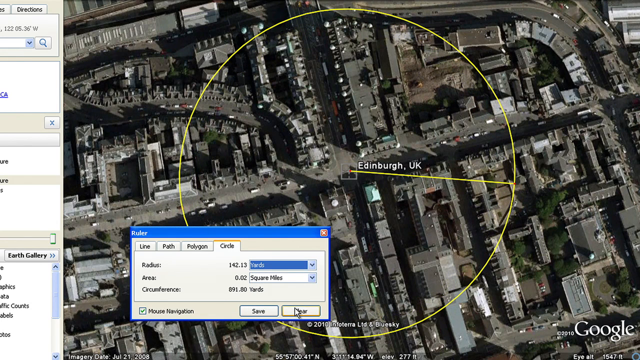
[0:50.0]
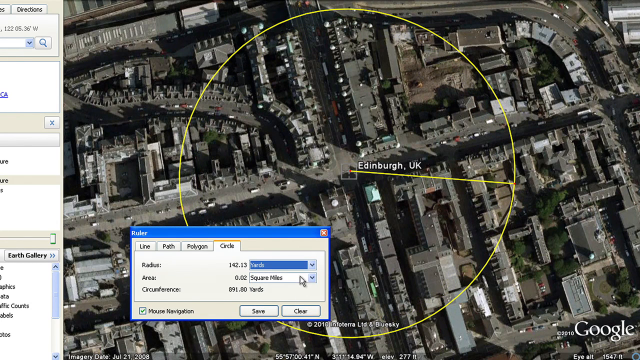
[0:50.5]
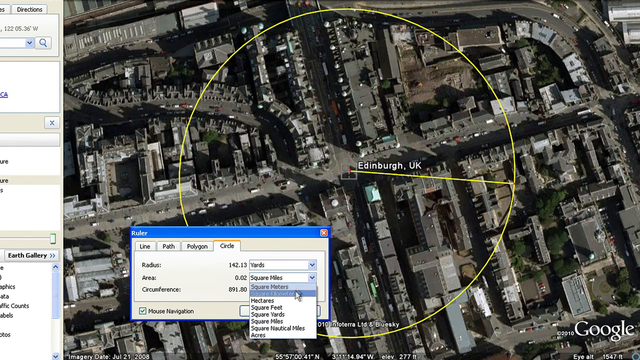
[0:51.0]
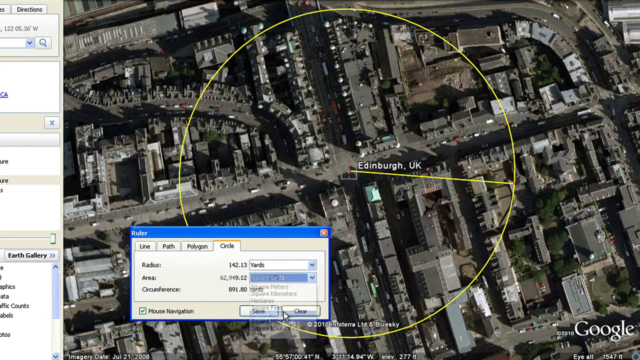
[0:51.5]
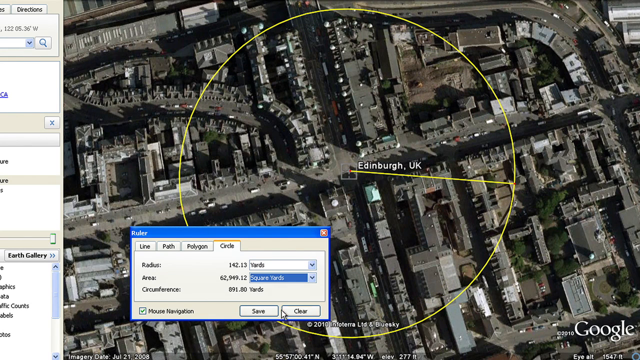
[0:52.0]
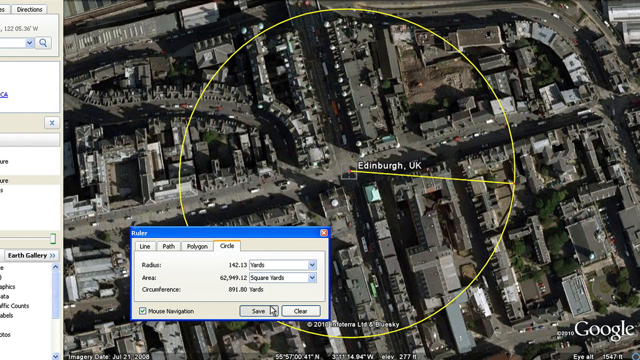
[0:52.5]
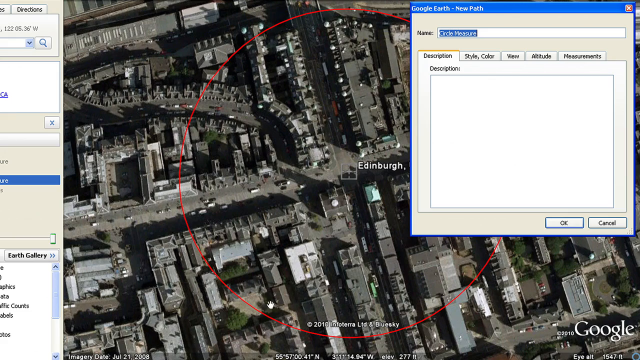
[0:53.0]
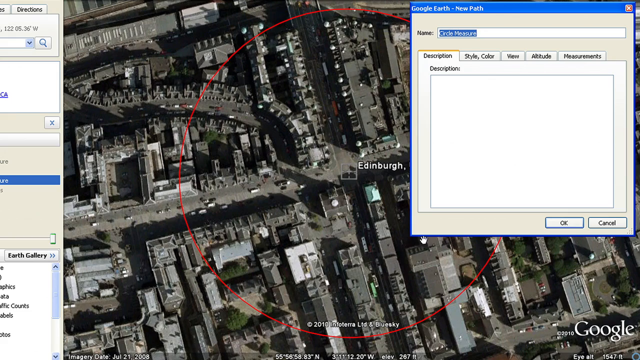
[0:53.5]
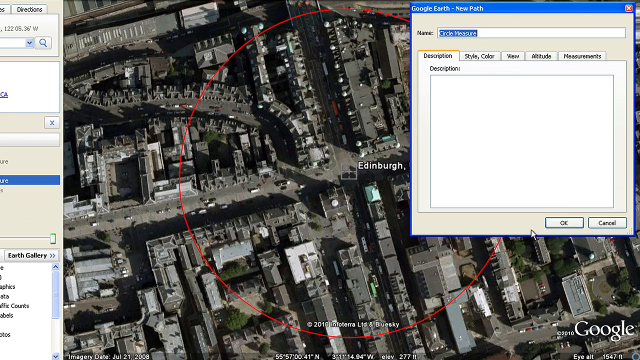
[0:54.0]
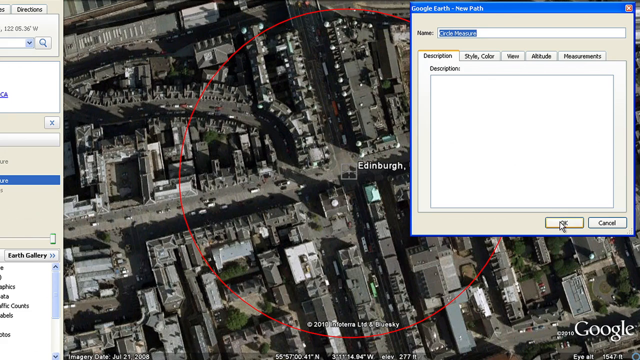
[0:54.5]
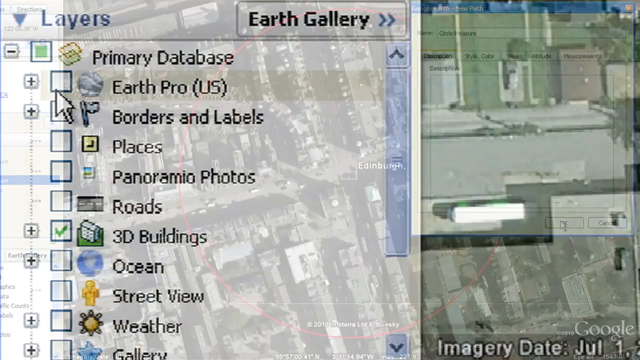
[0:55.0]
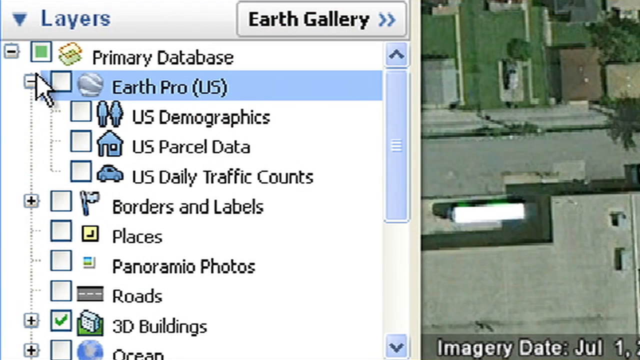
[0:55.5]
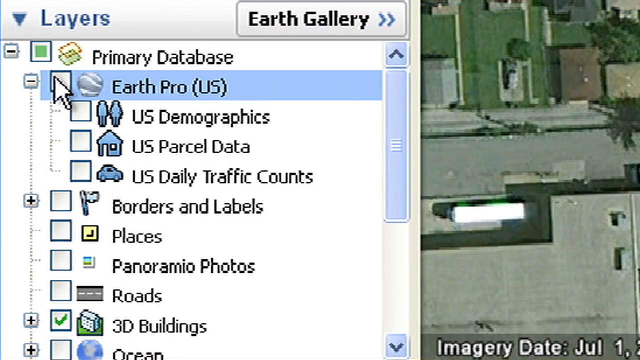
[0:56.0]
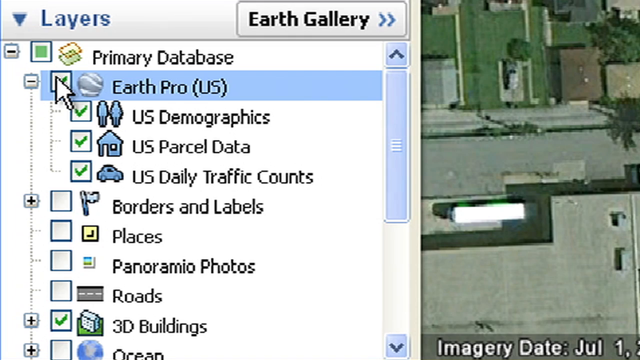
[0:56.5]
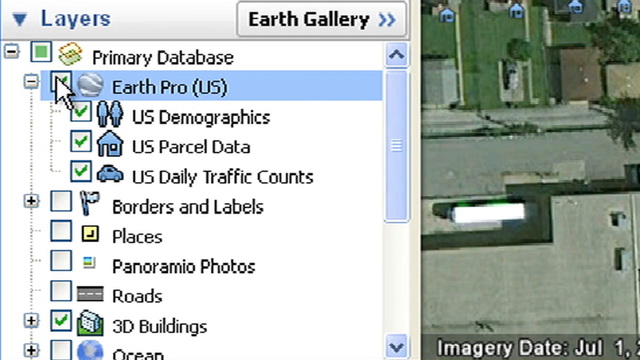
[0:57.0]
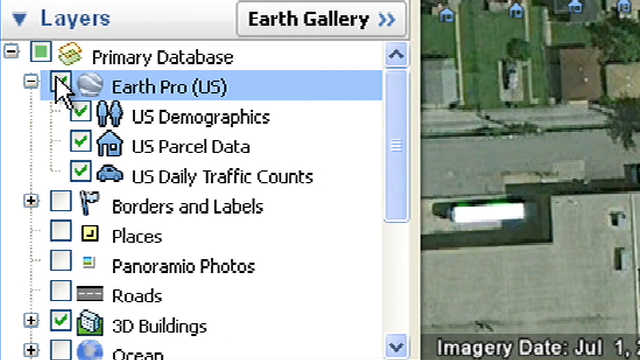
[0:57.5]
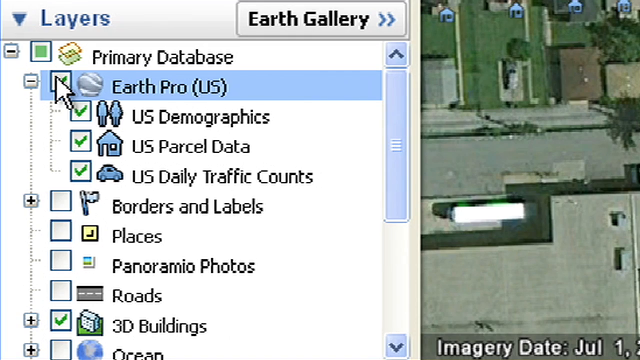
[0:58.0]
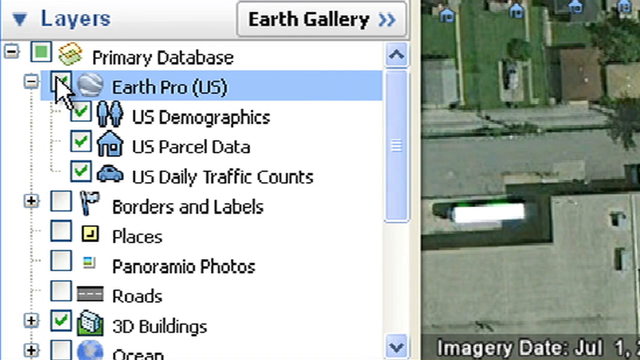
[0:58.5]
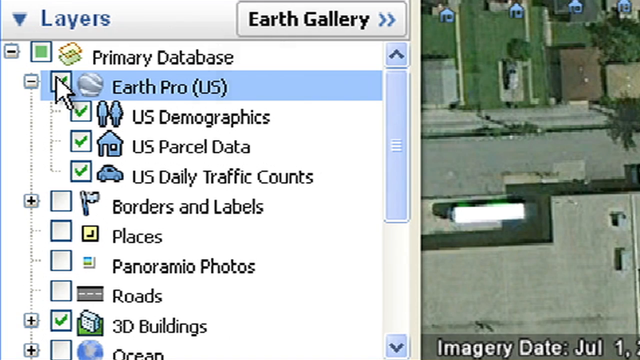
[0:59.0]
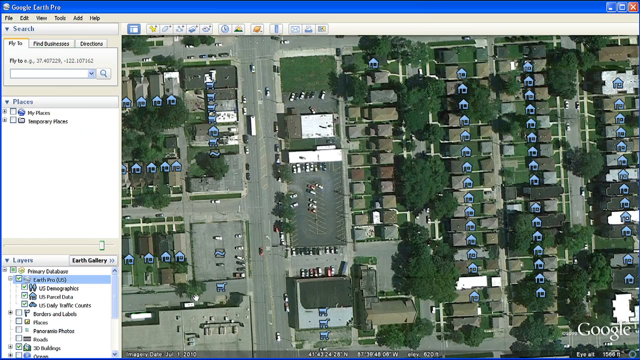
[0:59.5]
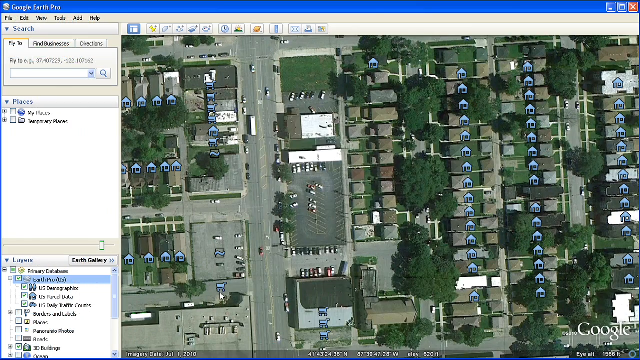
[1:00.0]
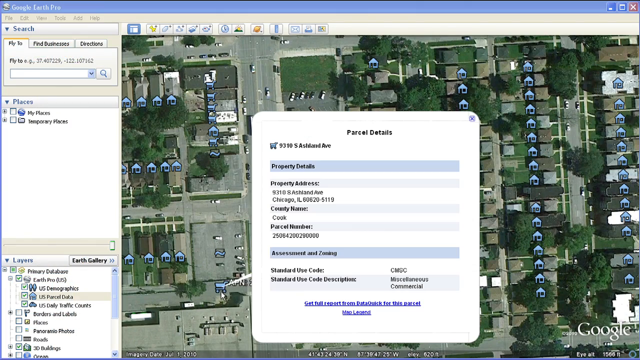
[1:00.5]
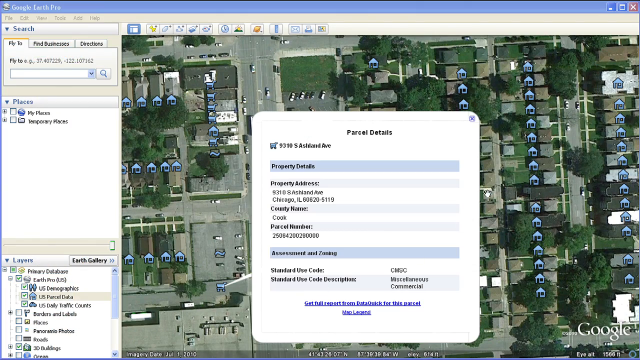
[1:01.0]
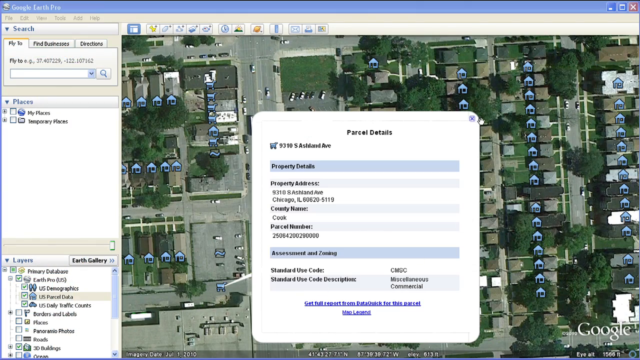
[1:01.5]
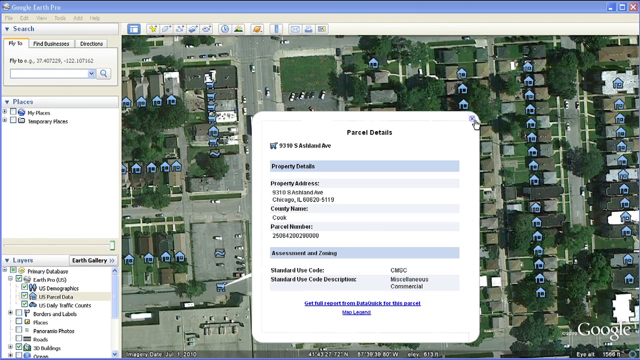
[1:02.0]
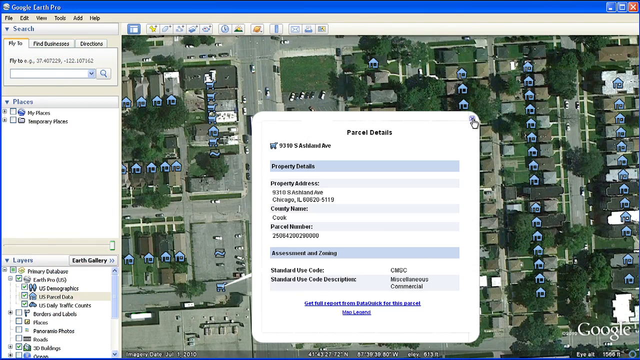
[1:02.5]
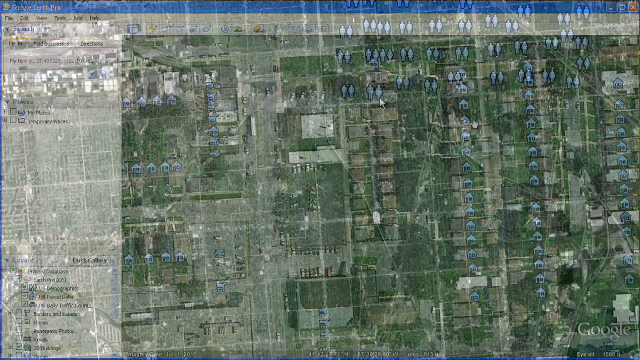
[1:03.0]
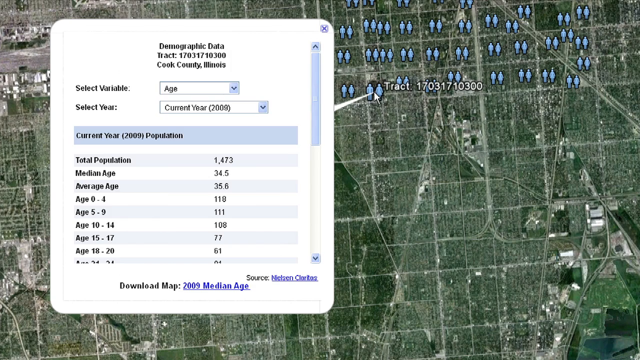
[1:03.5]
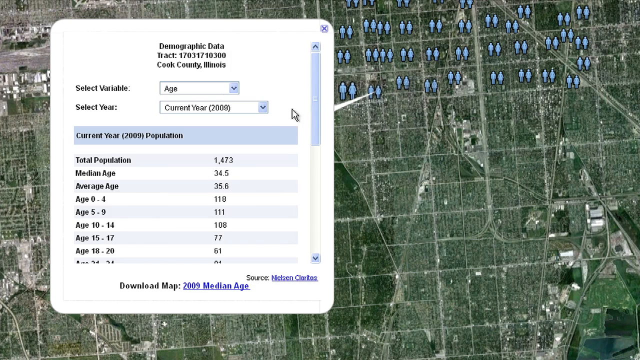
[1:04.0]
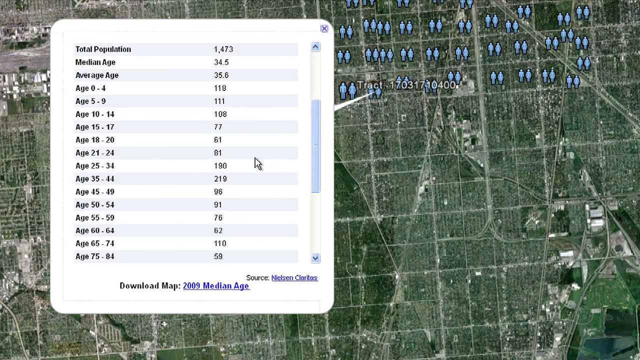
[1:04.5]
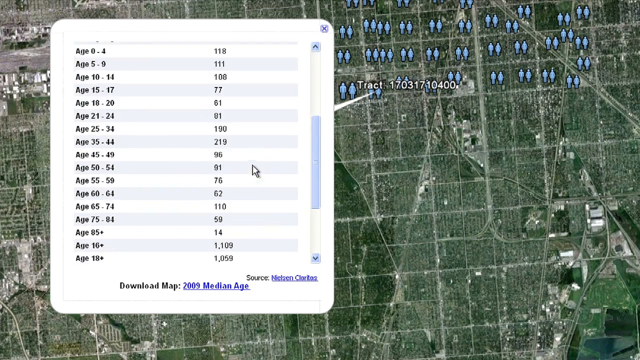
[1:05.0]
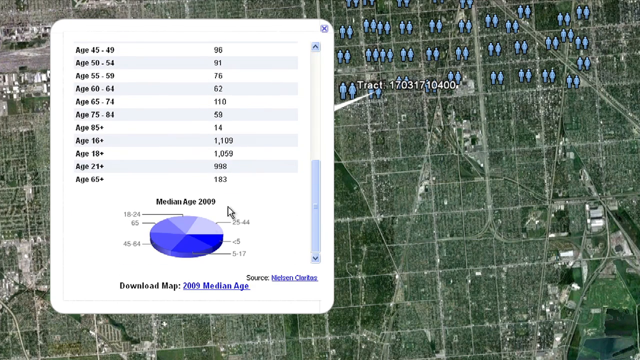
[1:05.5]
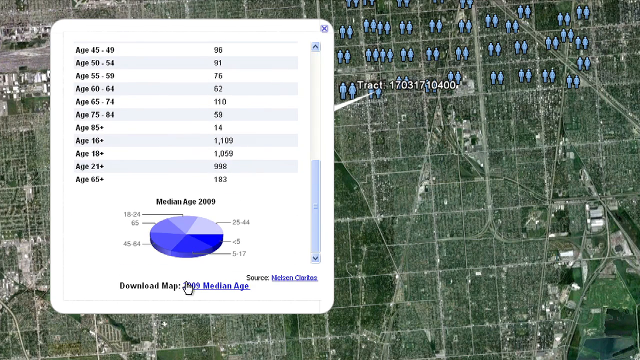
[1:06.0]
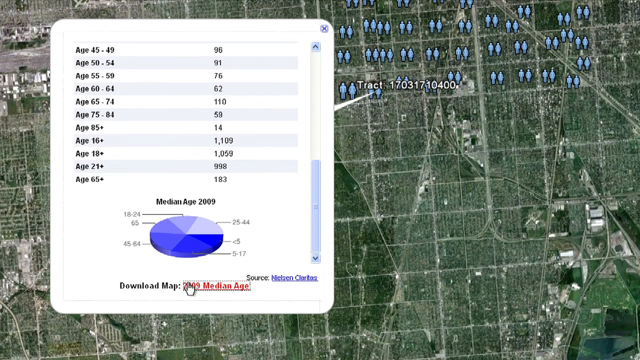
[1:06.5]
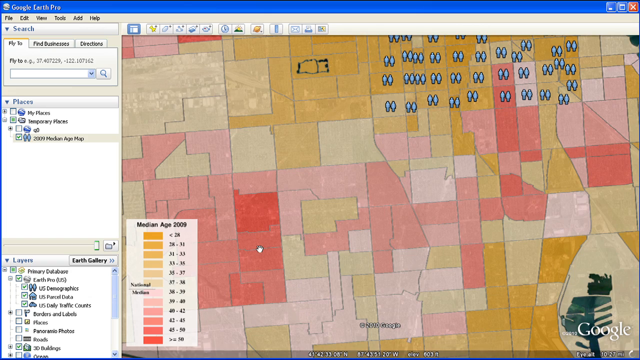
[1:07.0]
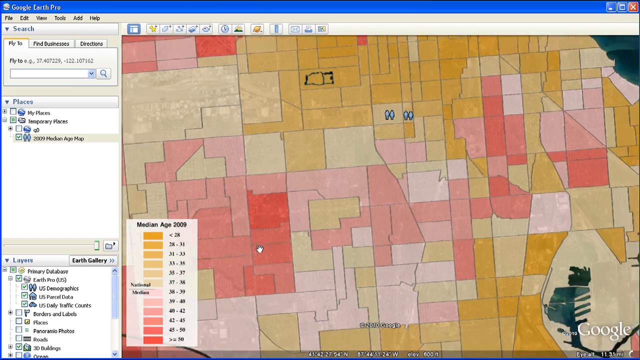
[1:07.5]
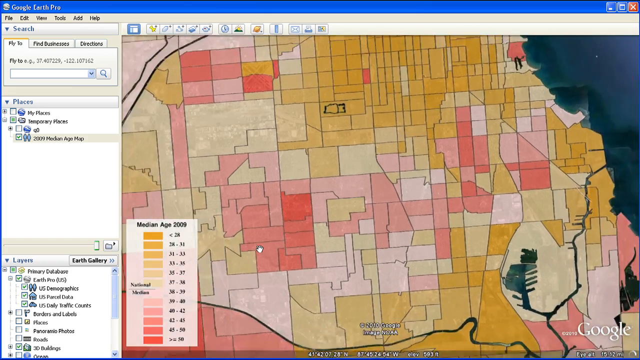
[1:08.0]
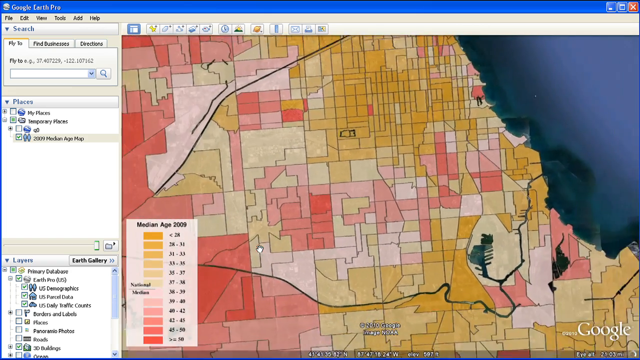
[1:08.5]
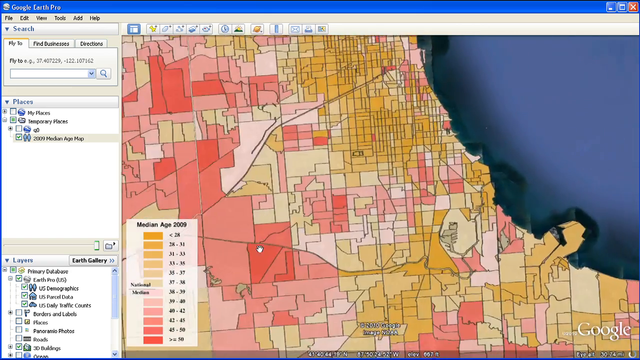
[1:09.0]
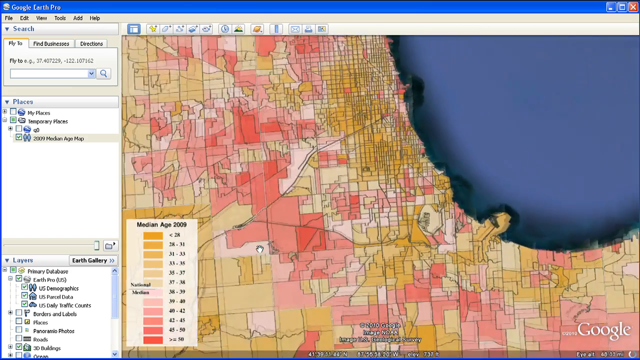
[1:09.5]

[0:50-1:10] The radius measurement type is changed to yards and the area measurement type to square yards, and the circumference automatically updates to yards. The radius is 142.13 yards, the area is 62,989.12 square yards, and the circumference is 191.80 yards. Save is clicked in the dialog, which closes it and opens a new window titled "Google Earth New Path." The name is auto-populated with "circle measure," and there are various editable tabs, but OK is clicked to save it. Next, a layers panel shows which layers are viewable; a primary database is currently viewable along with options below it, including Earth Pro, US Demographics, US Parcel Data and US Daily Traffic Counts, among others. A point on the map is clicked, opening parcel details with a number of property details listed underneath. Then a zoomed-in view of Google Earth appears, and a data point with two stick figures is clicked, bringing up demographic data for Cook County, Illinois. The dialog is scrolled down to show some of its data points and information, ending with a pie chart representing the median age in 2009.